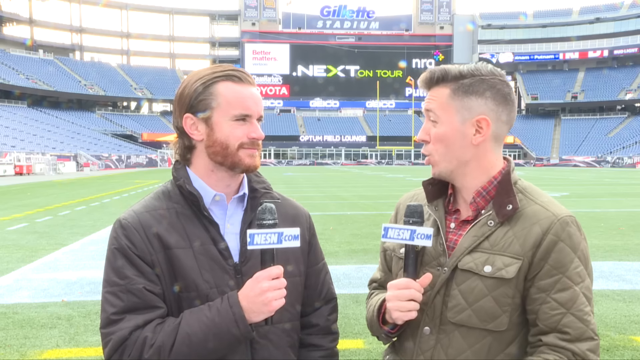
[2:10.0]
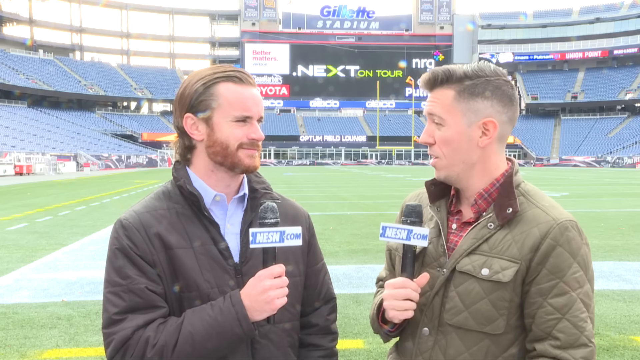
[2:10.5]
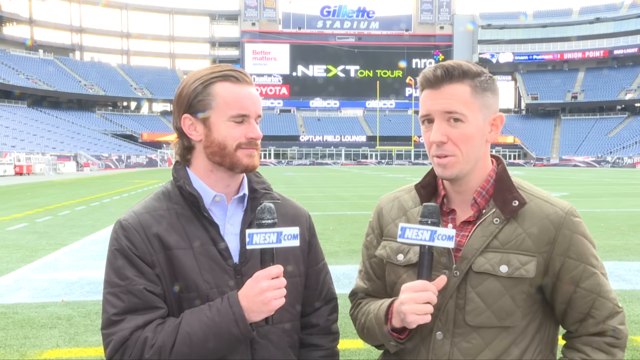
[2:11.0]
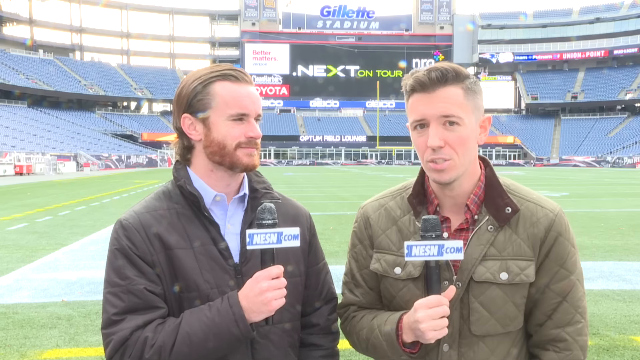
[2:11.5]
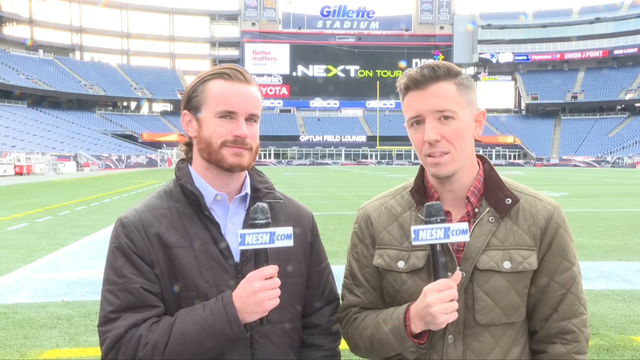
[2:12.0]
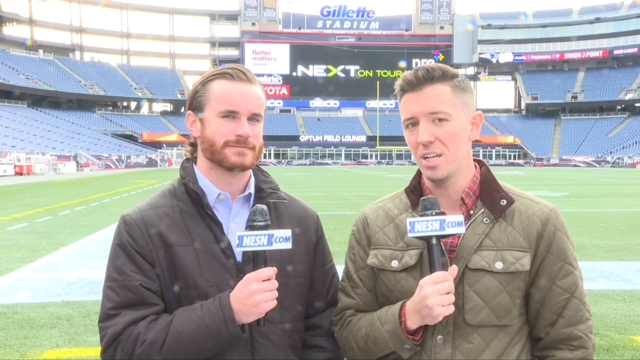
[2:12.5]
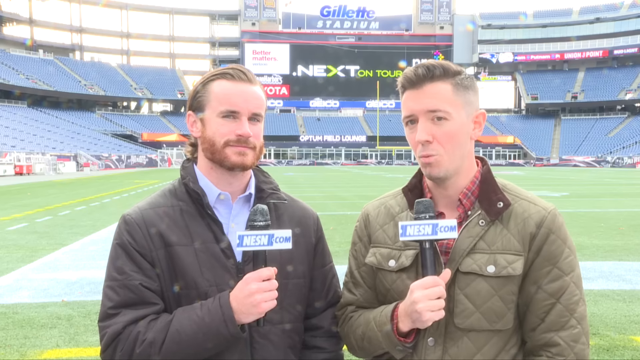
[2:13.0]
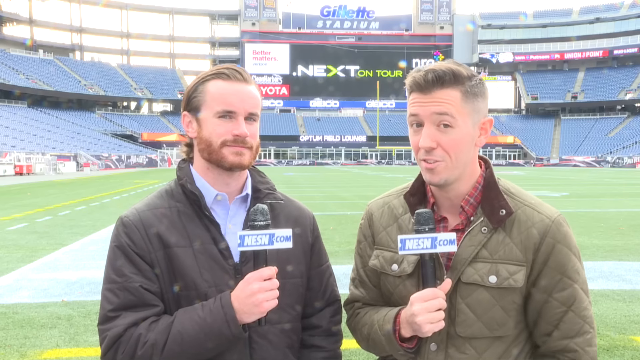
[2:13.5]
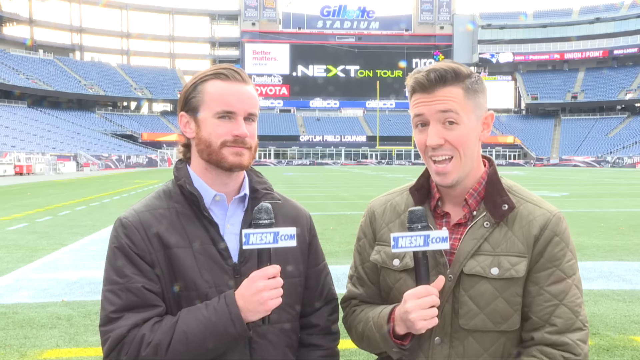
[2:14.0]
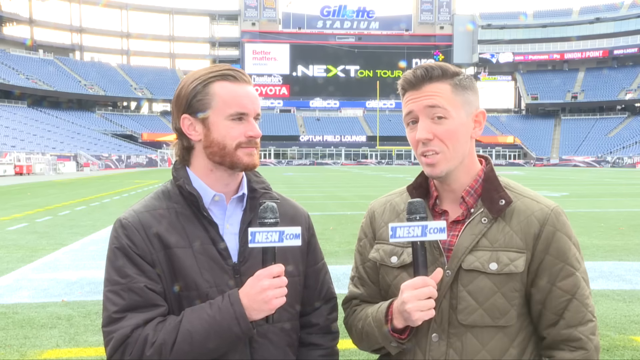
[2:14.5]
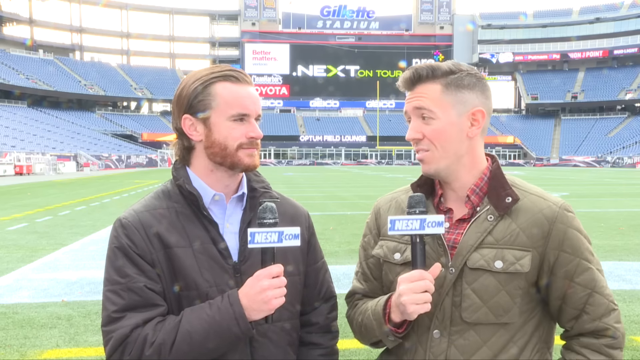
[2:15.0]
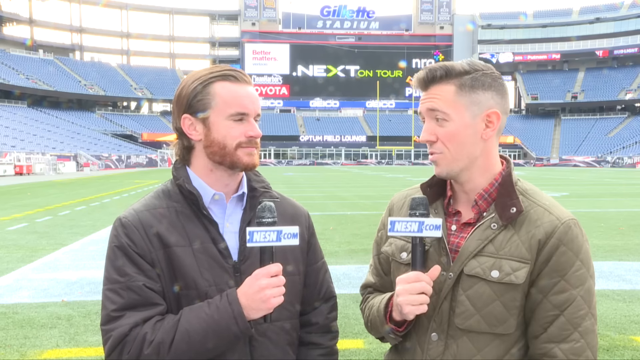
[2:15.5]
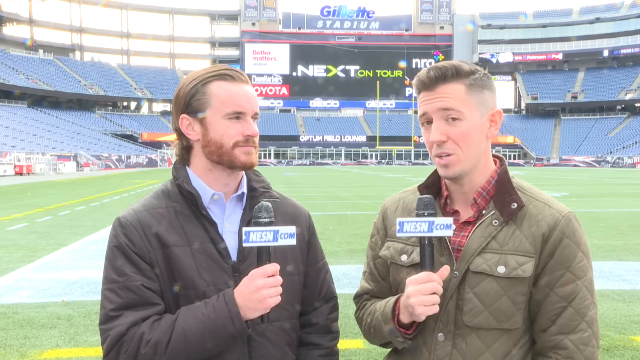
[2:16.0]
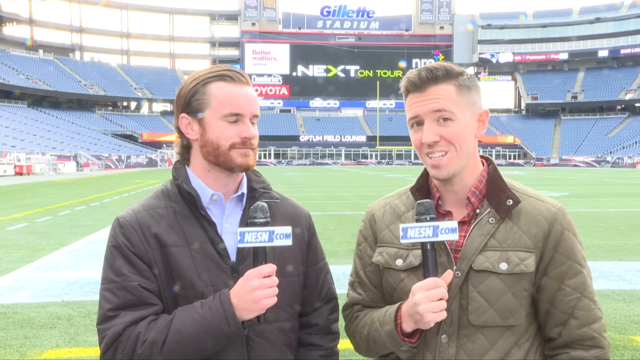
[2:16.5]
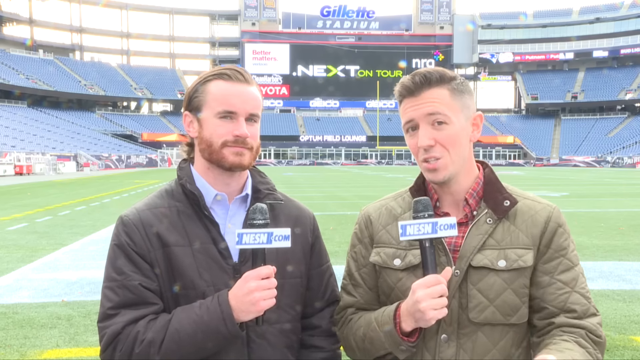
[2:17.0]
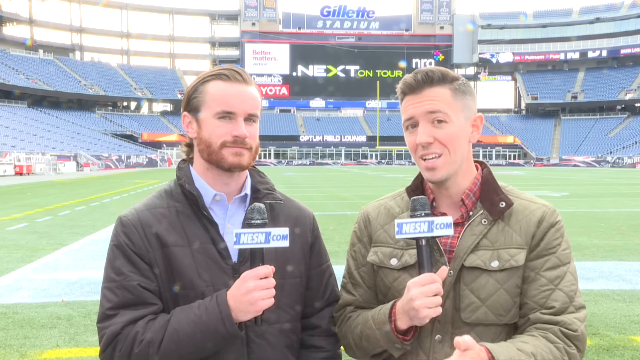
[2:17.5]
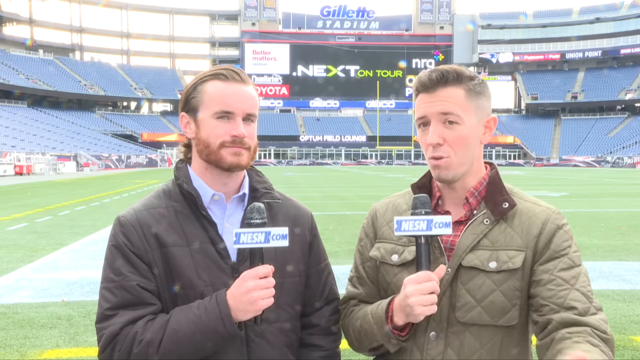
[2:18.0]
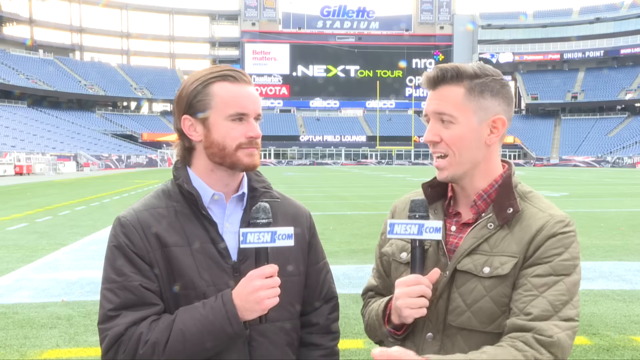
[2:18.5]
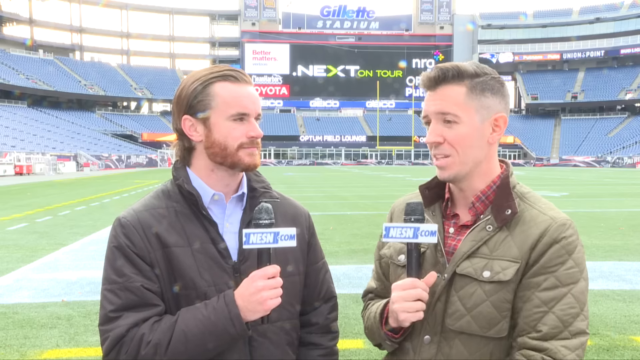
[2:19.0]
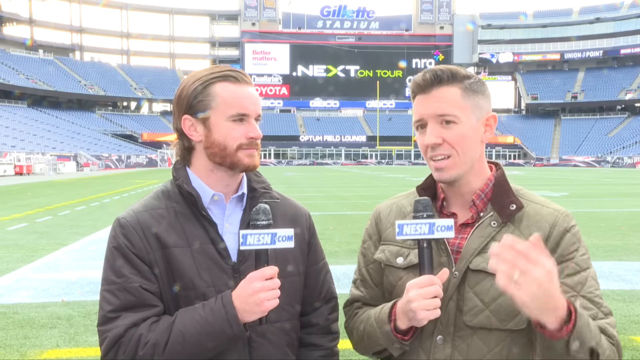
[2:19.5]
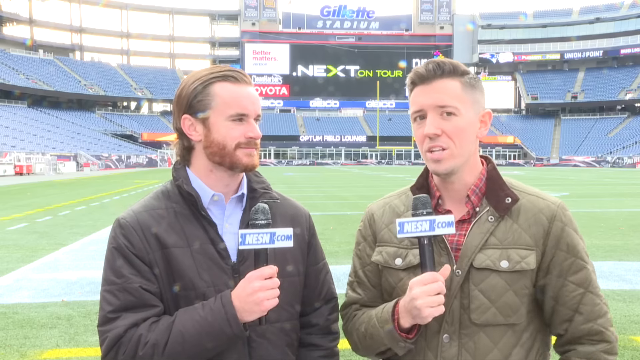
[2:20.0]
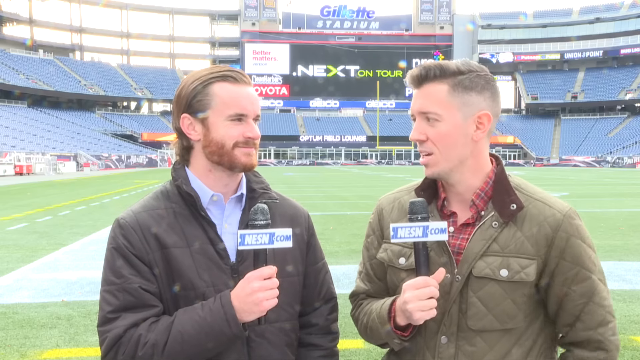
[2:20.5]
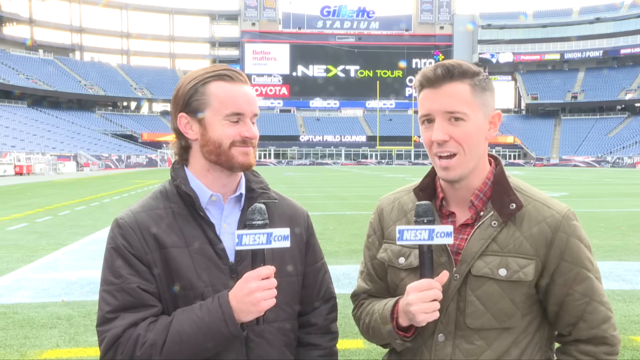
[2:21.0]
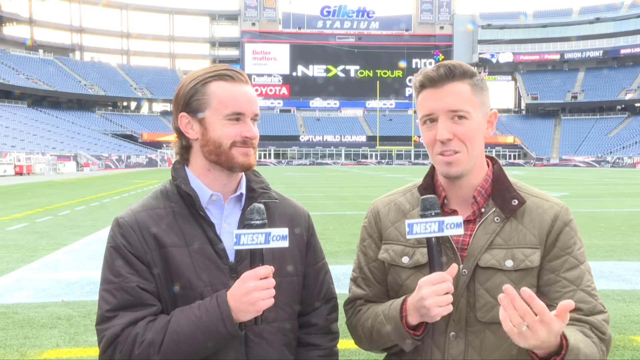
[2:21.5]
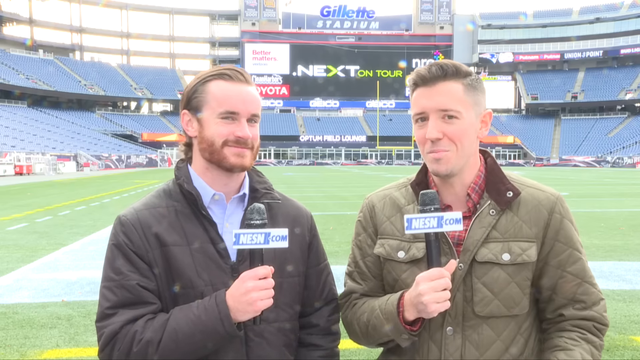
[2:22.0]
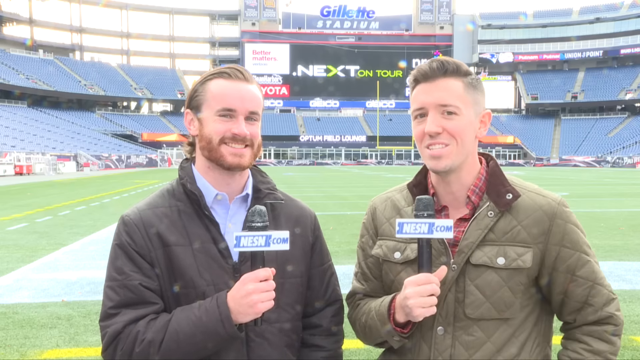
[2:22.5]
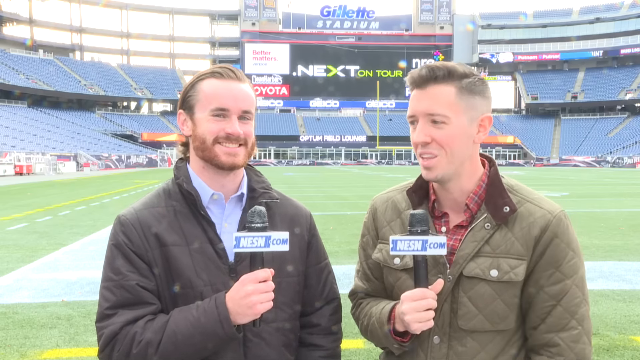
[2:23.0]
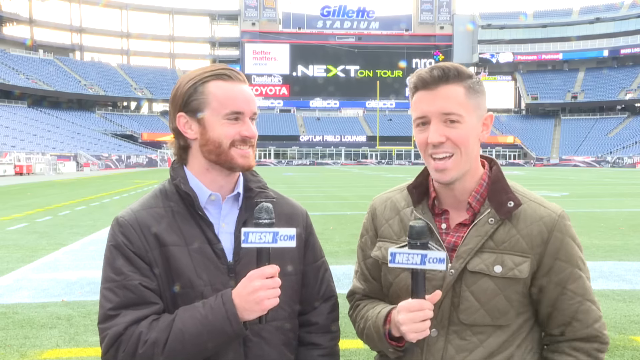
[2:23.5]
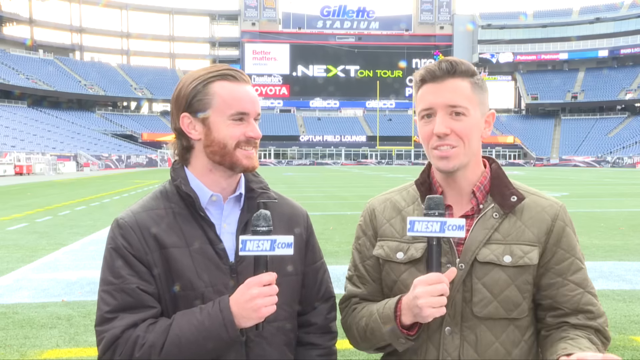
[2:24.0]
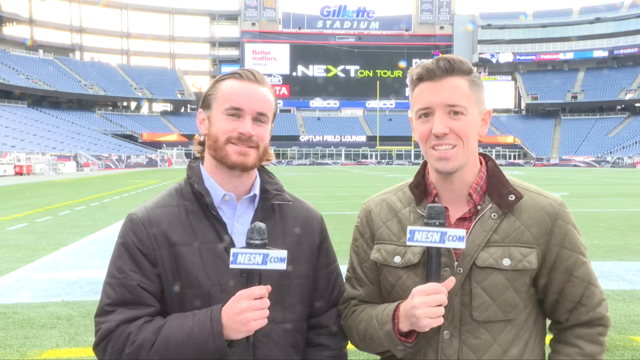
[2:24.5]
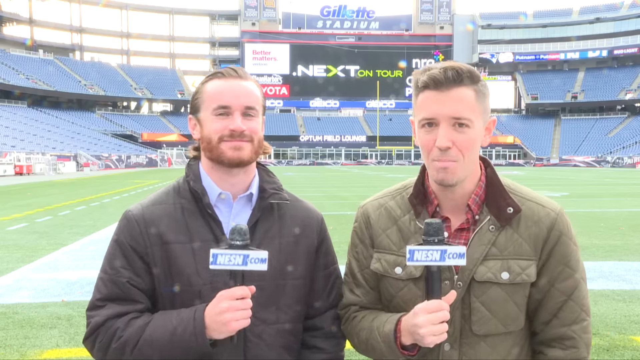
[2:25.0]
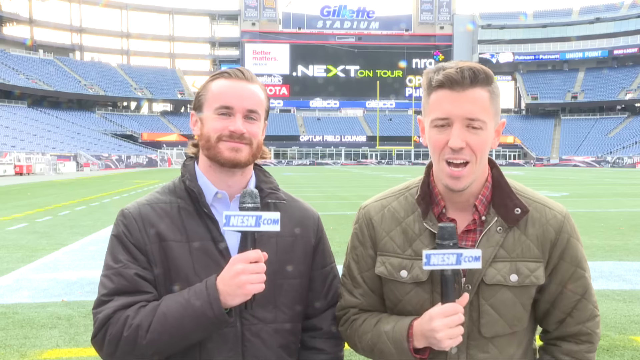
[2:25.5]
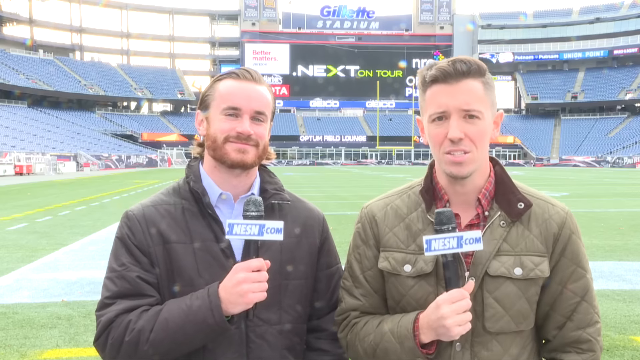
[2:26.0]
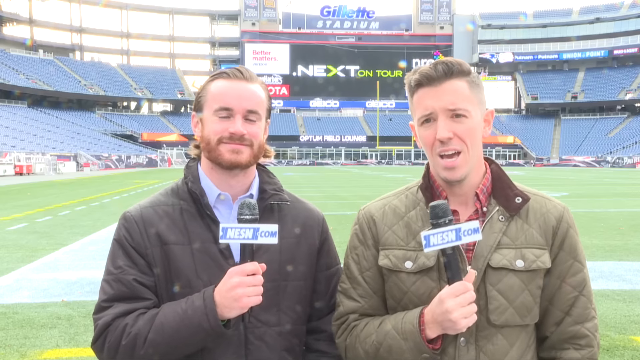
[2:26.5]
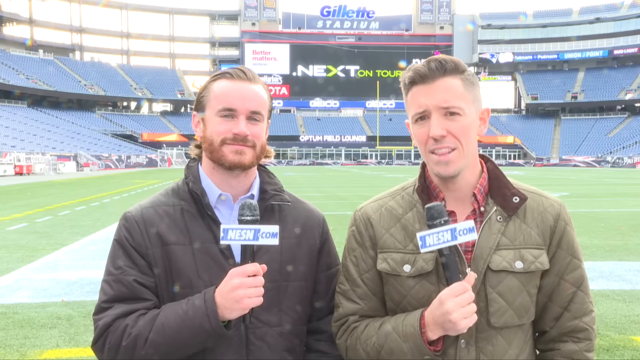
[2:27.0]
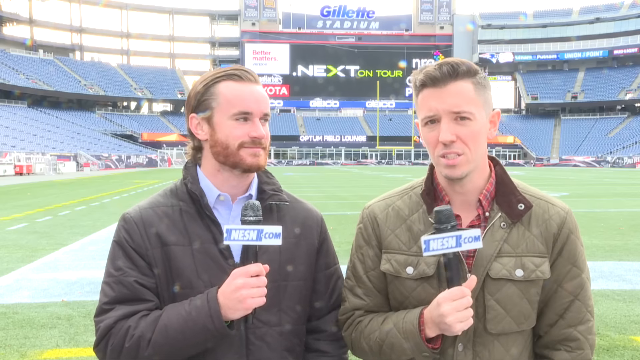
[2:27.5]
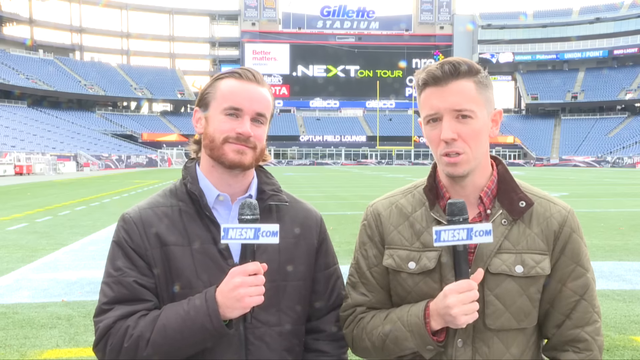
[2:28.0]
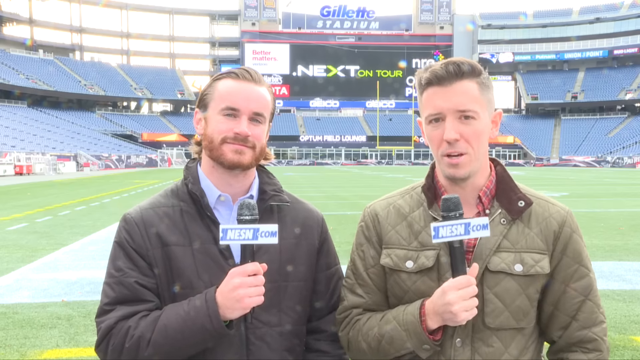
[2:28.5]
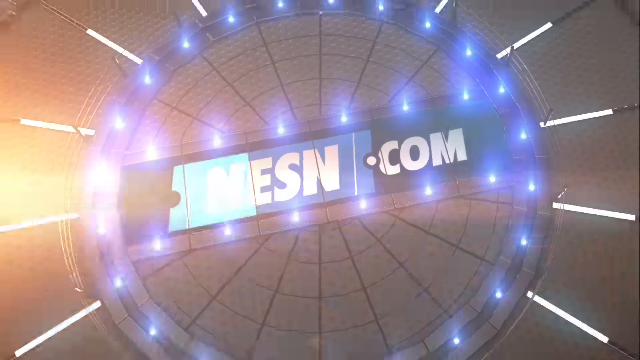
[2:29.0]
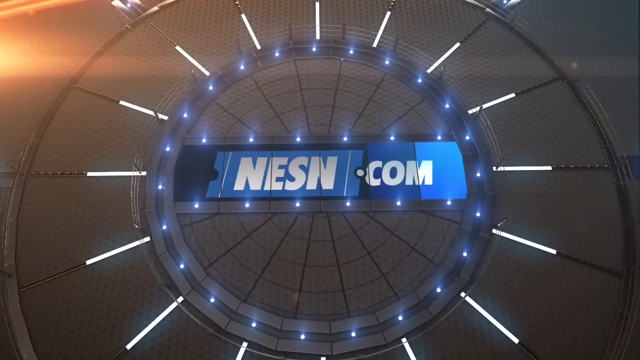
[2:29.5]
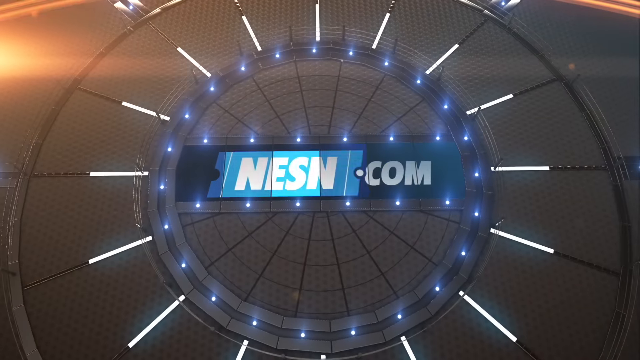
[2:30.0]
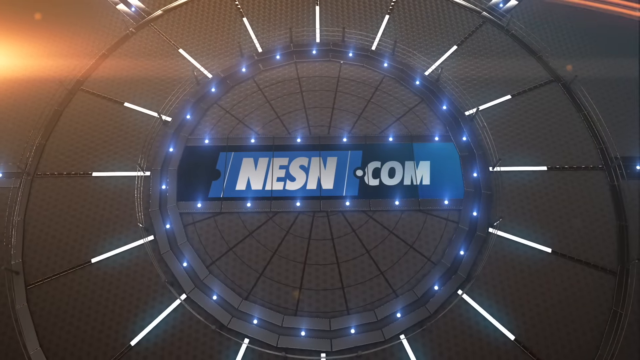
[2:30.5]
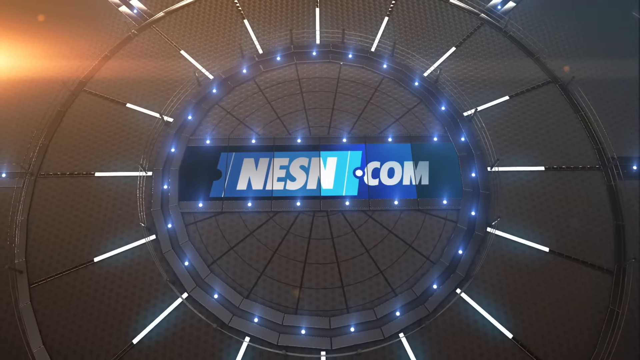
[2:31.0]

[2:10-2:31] Two sportscasters for NESN.com speak into microphones held in their right hands, with little boxes around the microphones showing those letters. They report from Gillette Stadium, whose name is written at the top of the stadium, where a blue sign illuminating the word Gillette moves back and forth. A little digital strip on the right-hand side changes color. Then an NESN.com logo appears: it is in a circle with little lights and spikes coming out, the inner portion kind of looks like a spider web, and a larger circle forms the exterior, on a brown background. On the left side is a bright yellow light that almost looks like the sun coming out. The video ends there.